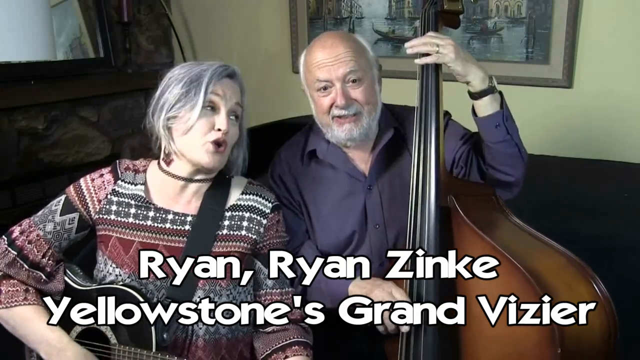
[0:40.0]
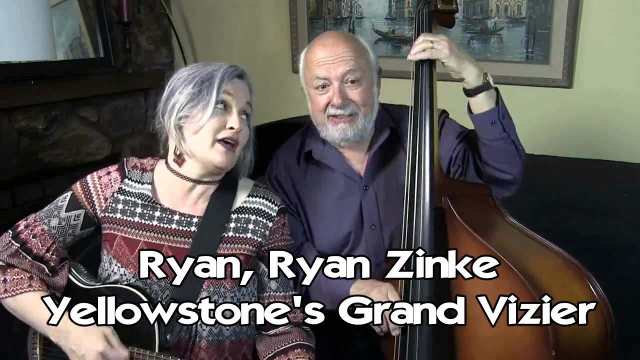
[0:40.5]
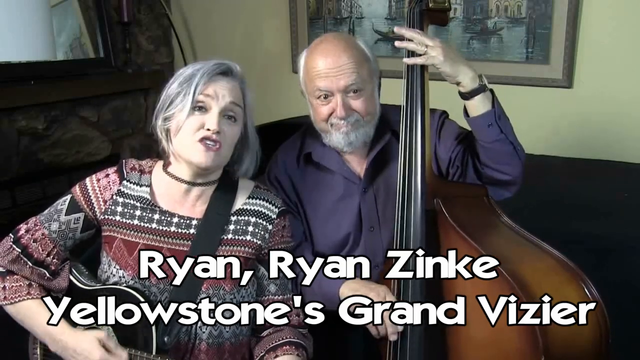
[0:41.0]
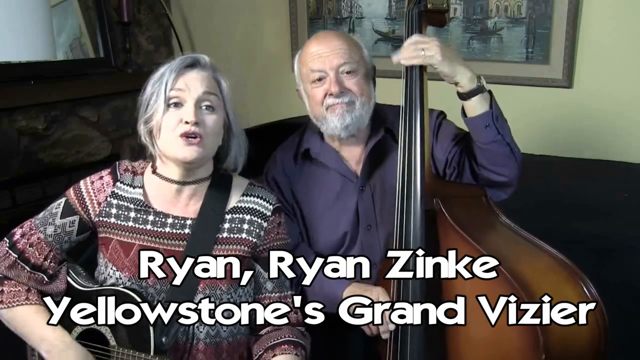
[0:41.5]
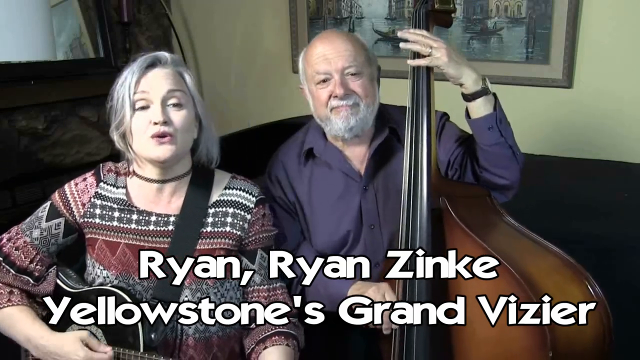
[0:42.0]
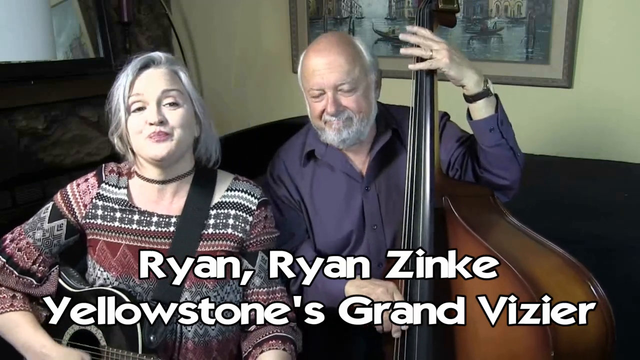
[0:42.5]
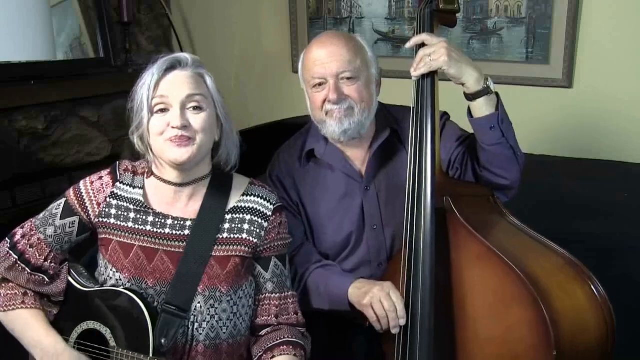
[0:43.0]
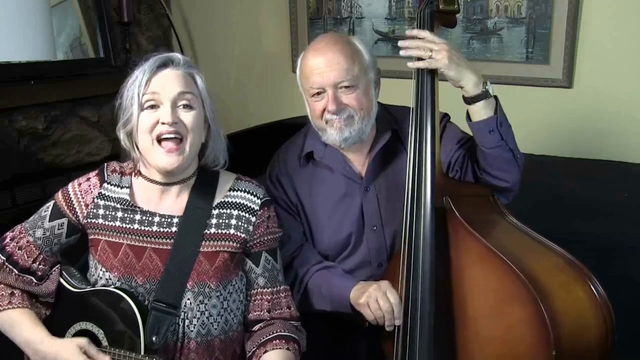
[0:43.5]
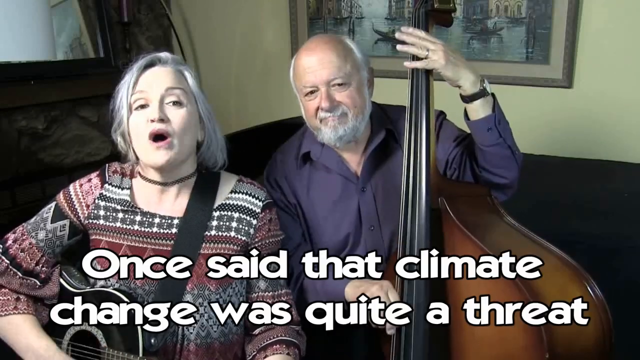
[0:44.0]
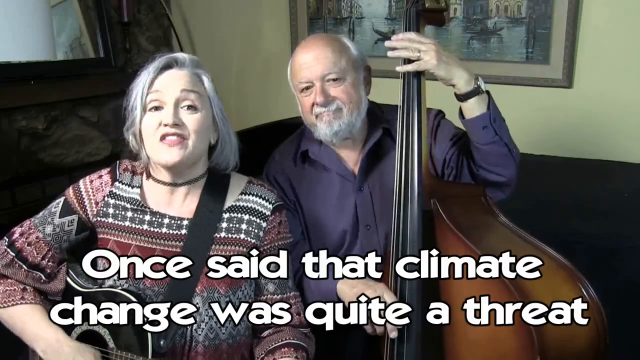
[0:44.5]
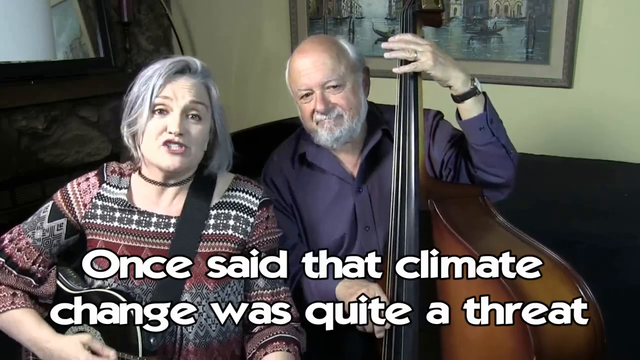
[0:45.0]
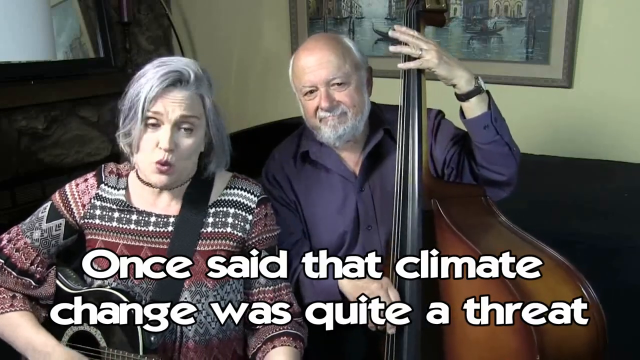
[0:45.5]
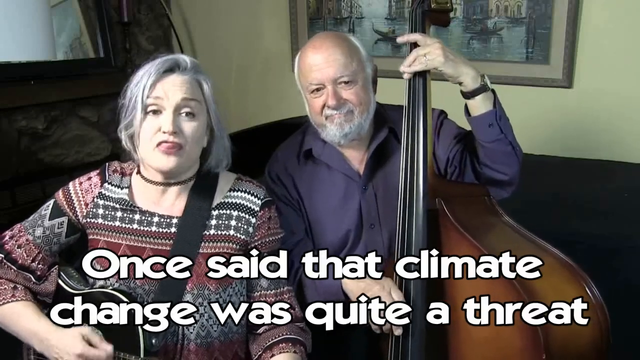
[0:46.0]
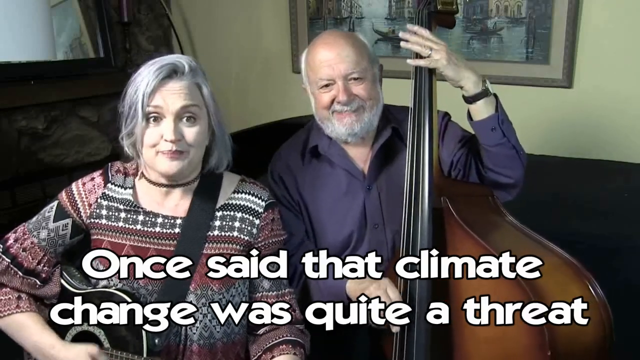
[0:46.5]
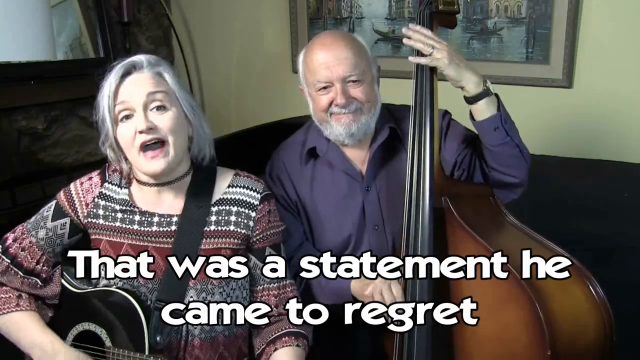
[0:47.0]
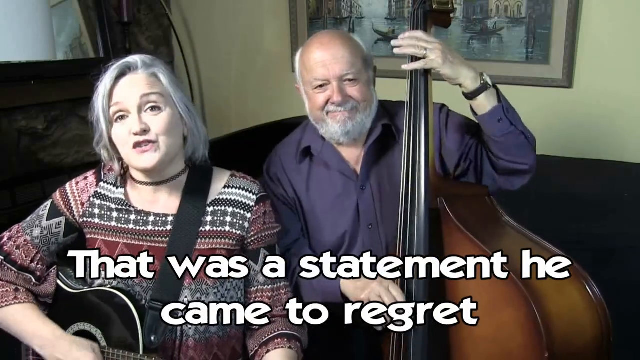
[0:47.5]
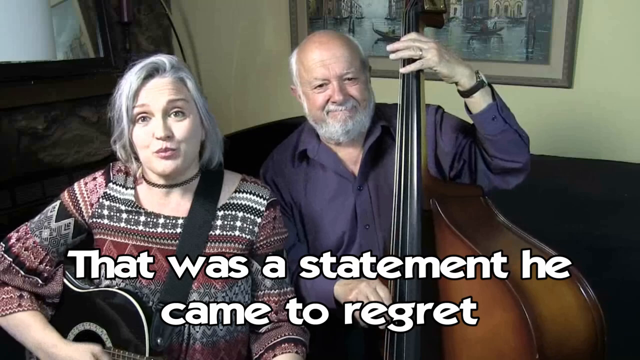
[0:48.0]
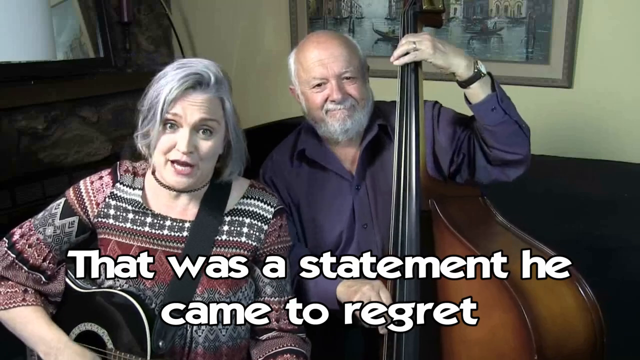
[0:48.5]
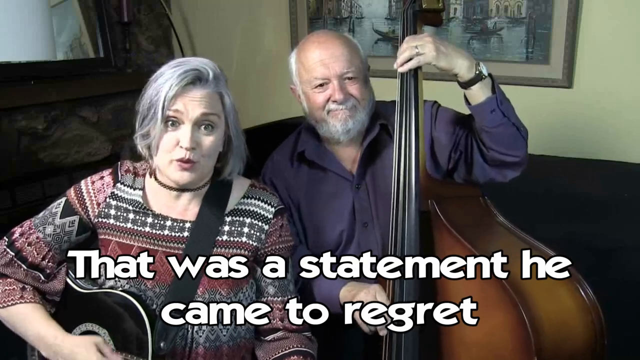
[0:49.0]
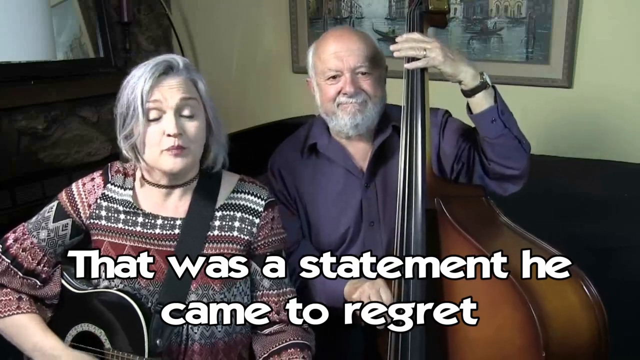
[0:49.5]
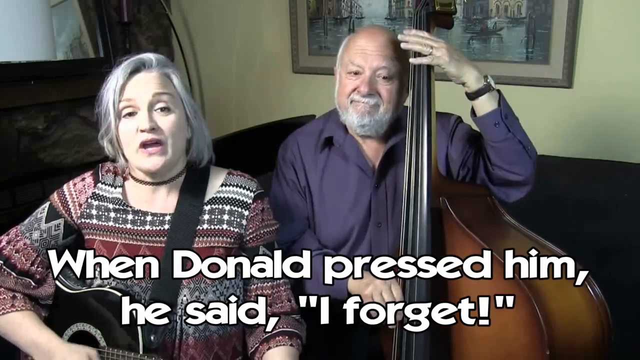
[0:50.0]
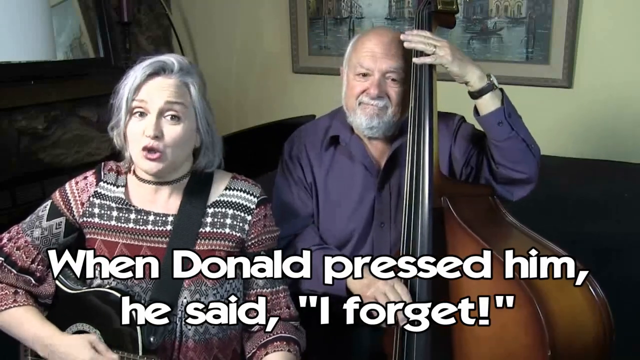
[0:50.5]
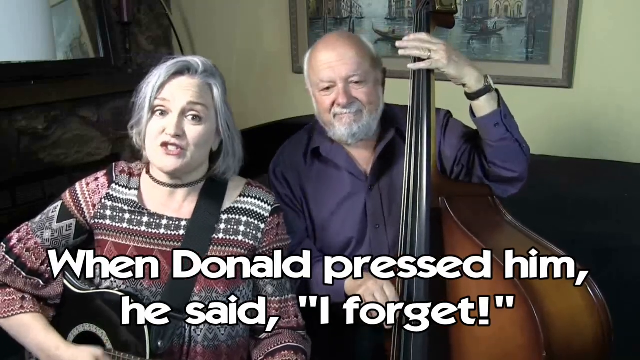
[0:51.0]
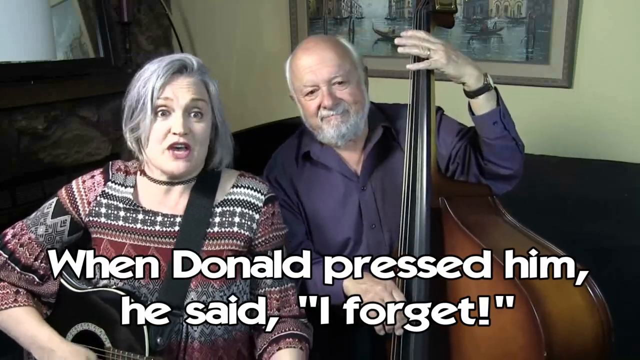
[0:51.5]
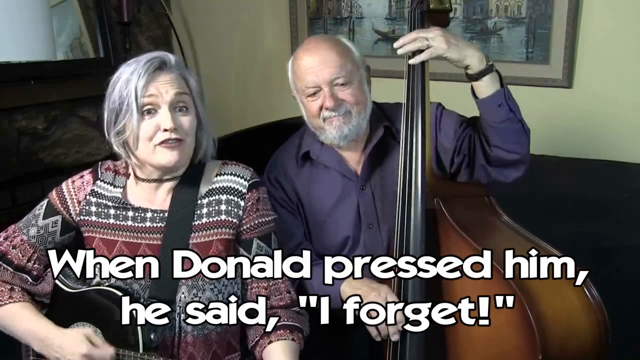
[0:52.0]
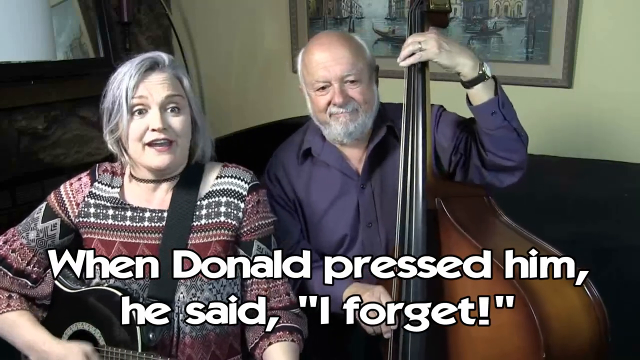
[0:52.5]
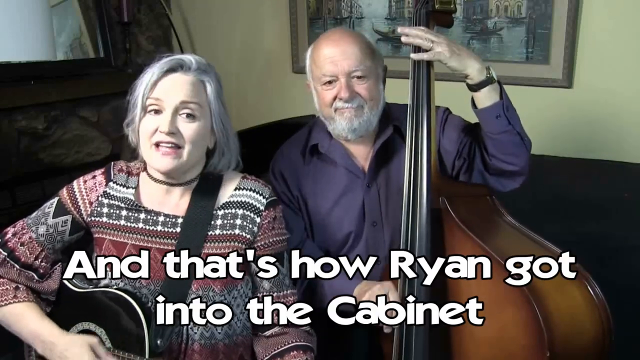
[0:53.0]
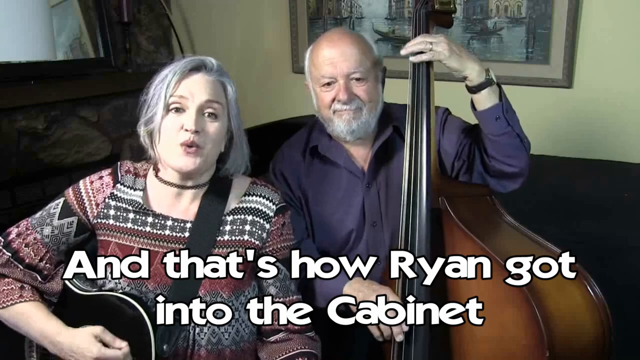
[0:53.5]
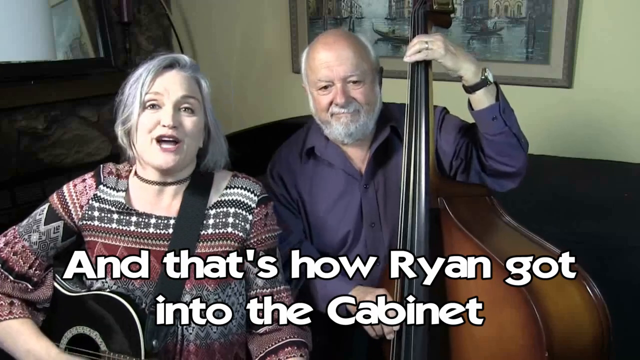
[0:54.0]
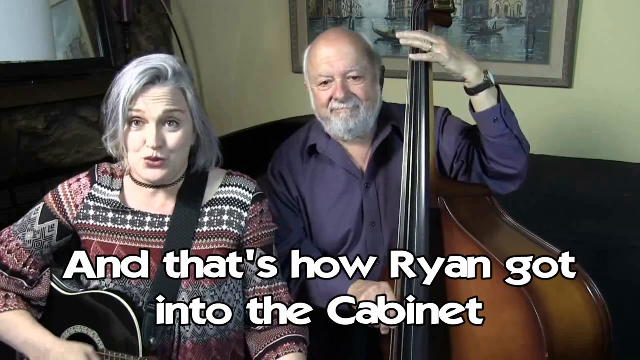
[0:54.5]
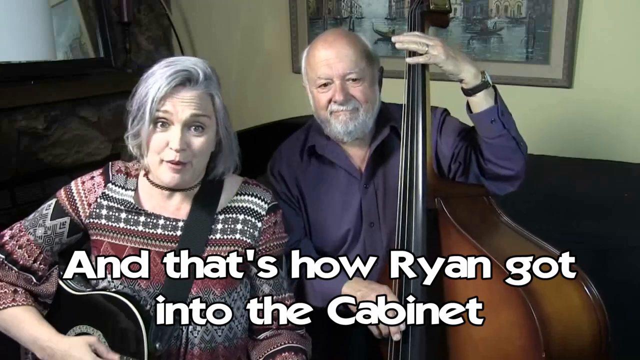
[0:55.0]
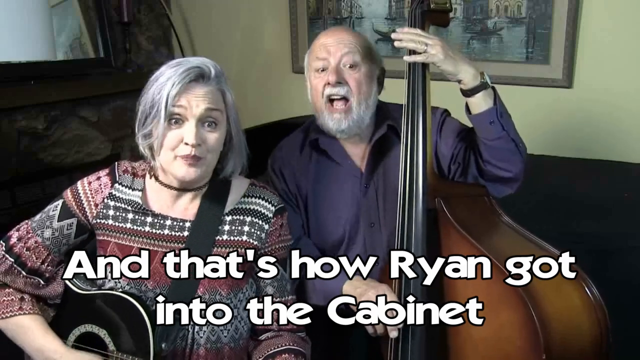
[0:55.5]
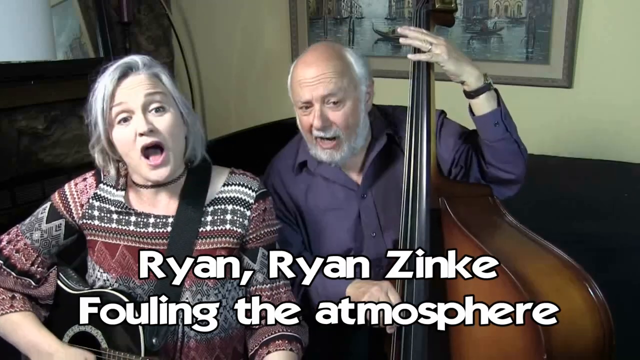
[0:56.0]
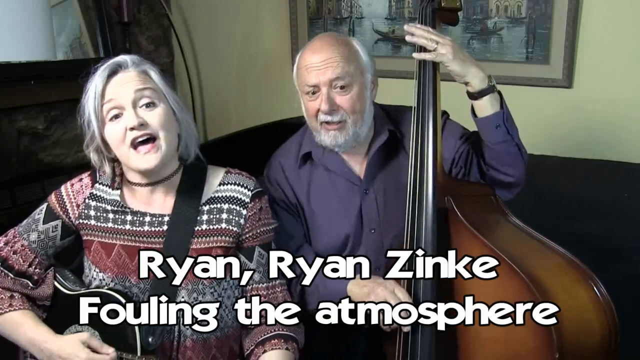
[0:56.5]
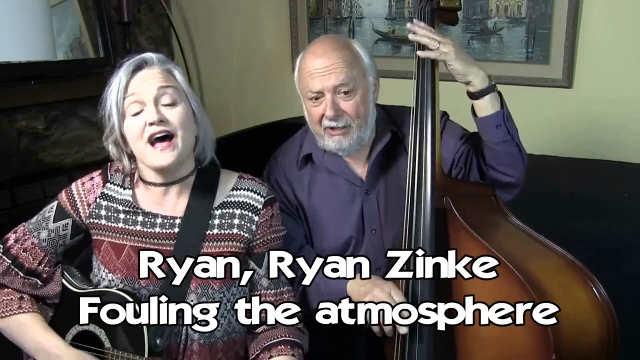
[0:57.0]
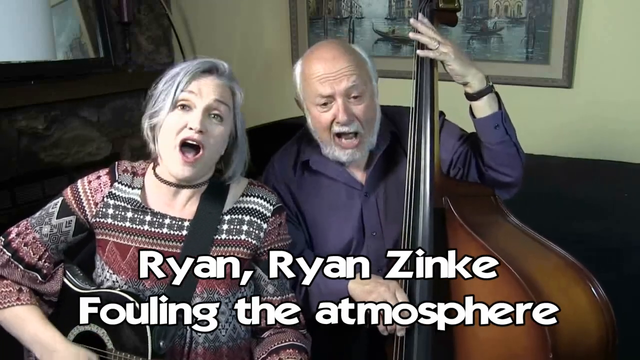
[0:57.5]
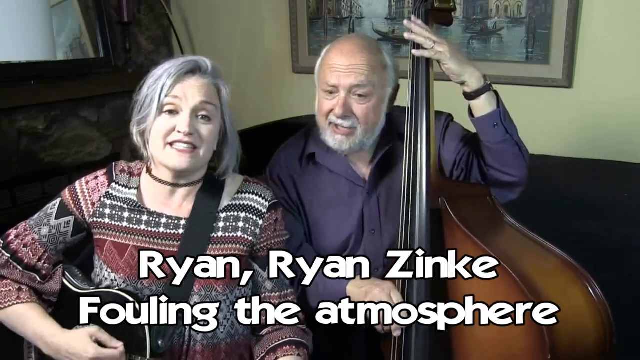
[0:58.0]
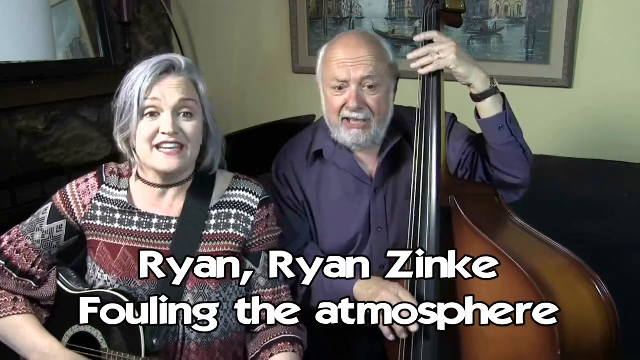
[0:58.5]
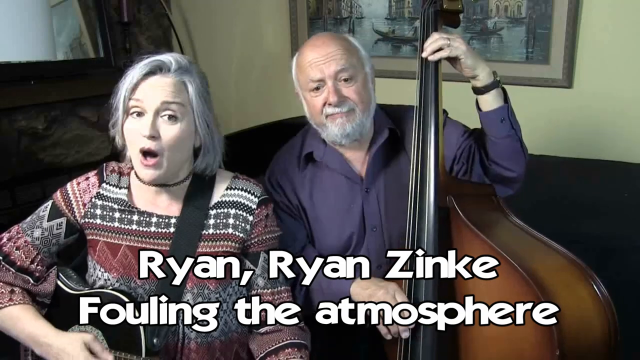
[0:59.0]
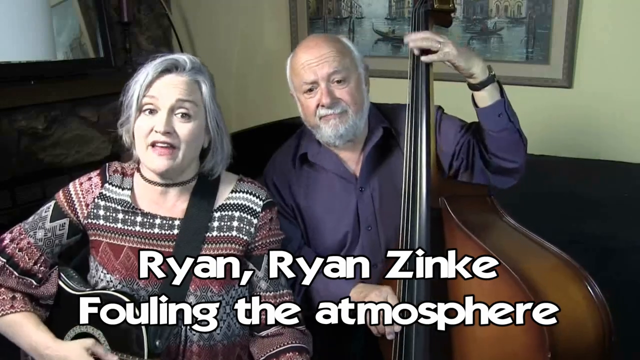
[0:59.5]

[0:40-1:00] The woman continues singing and playing guitar, and the man wears a lavender button-down shirt. The subtitles read "that was a statement he came to regret. When Donald pressed him, he said, I forget. And that's how Ryan got into the cabinet." The song seems to be somewhat political. The background is still the cream teal wall with a picture hanging on it. Both people are sitting down, apparently on a couch. The stand-up bass is a maroon wood color, and the guitar is black and white. The woman wears a guitar strap that holds the guitar on her shoulder, a black necklace, and earrings that appear to be brown; she has shoulder-length gray hair. The man is balding and has a white beard, and he seems to be in his sixties.